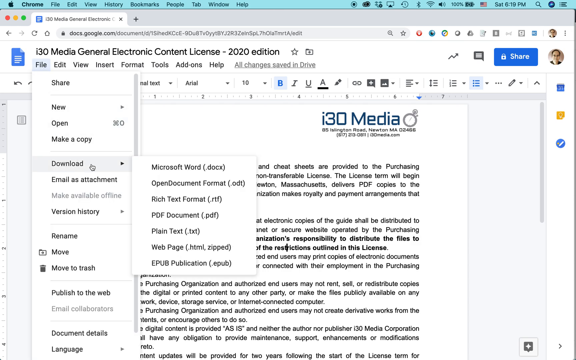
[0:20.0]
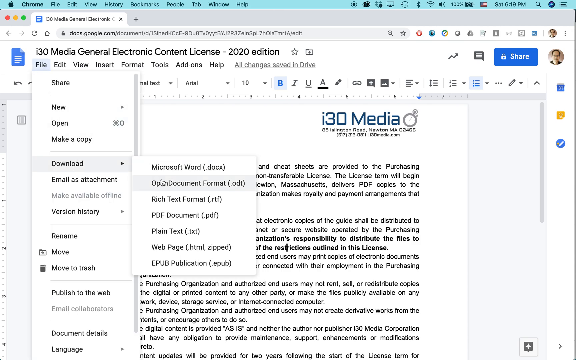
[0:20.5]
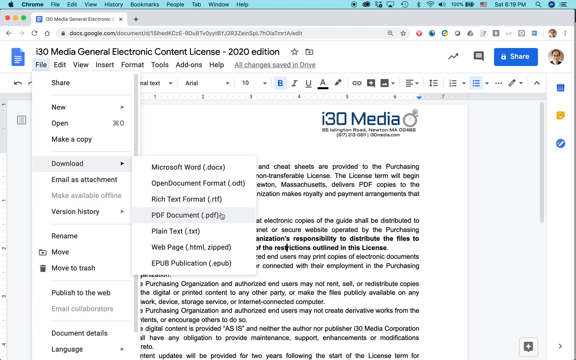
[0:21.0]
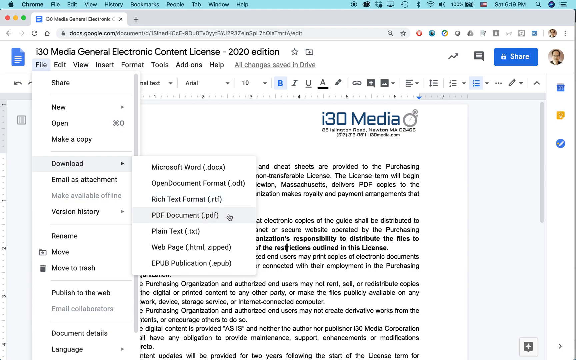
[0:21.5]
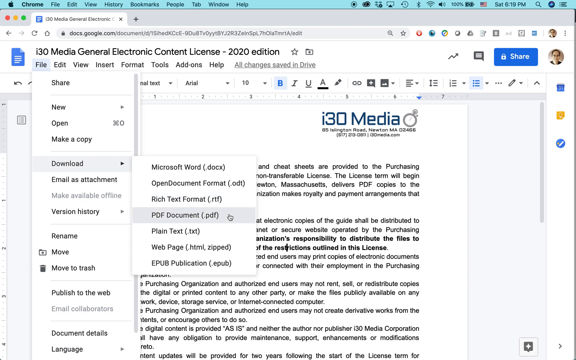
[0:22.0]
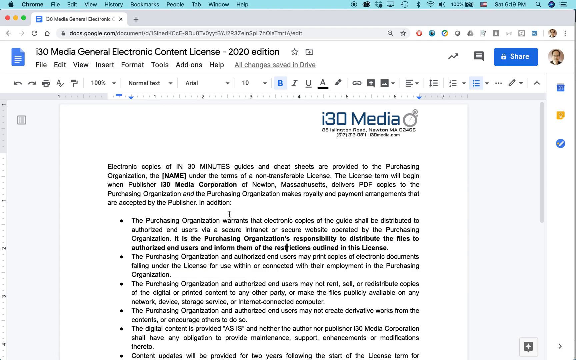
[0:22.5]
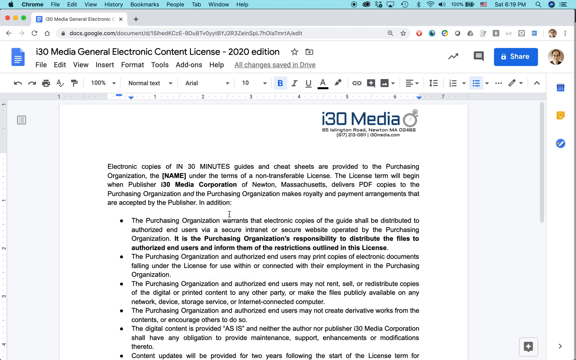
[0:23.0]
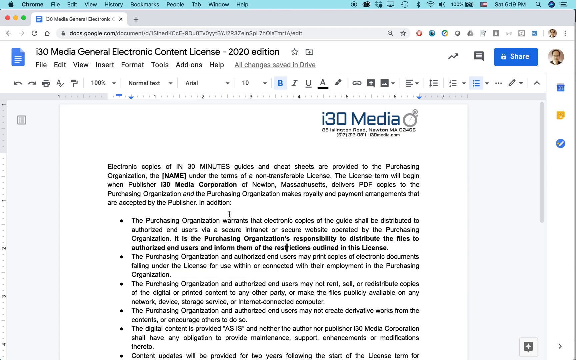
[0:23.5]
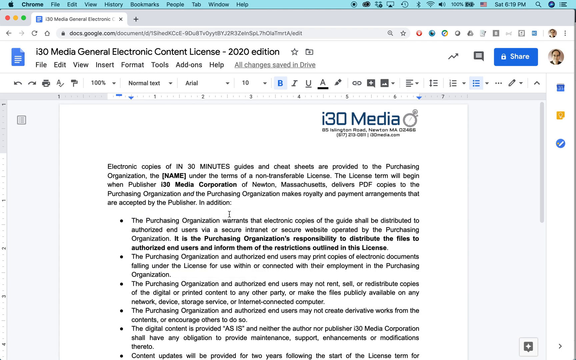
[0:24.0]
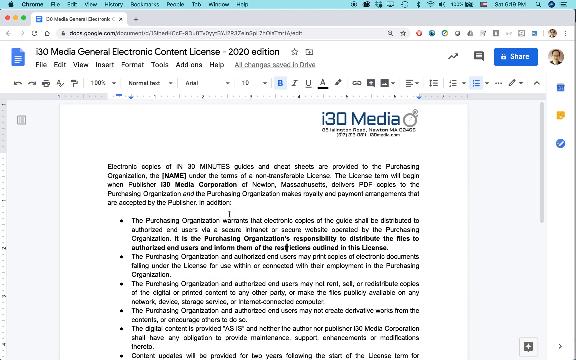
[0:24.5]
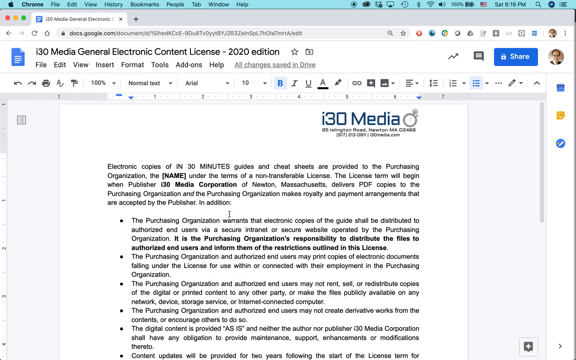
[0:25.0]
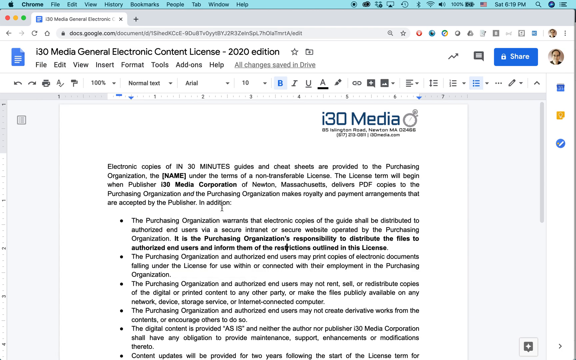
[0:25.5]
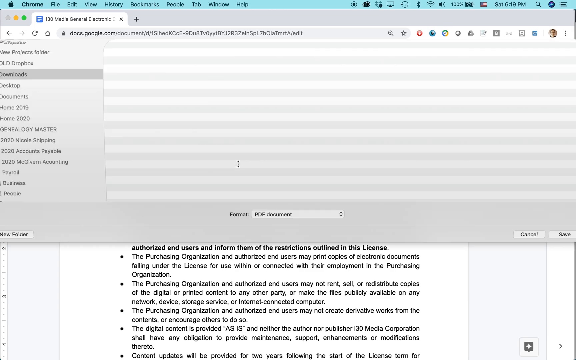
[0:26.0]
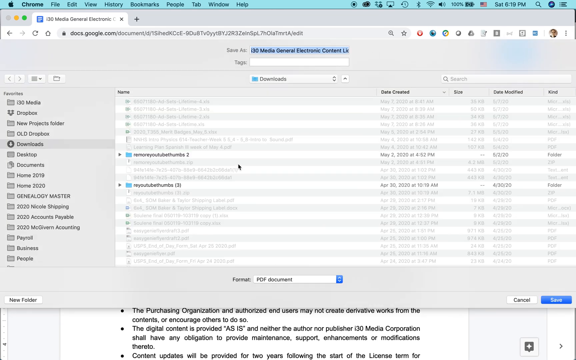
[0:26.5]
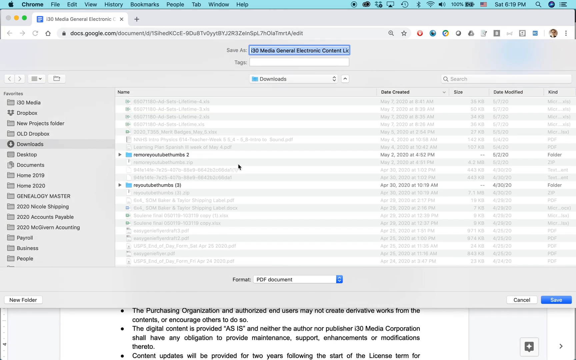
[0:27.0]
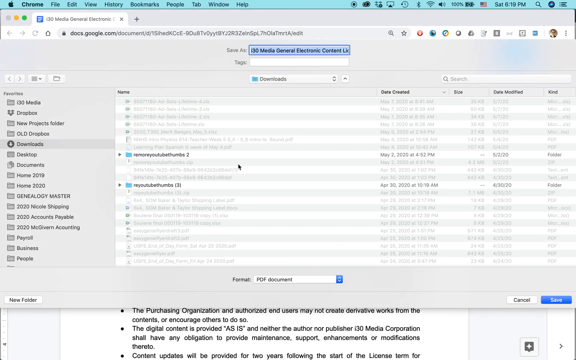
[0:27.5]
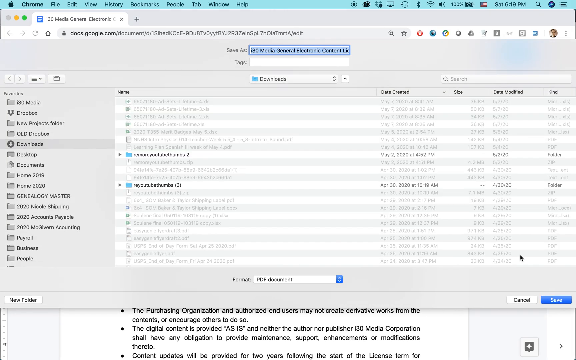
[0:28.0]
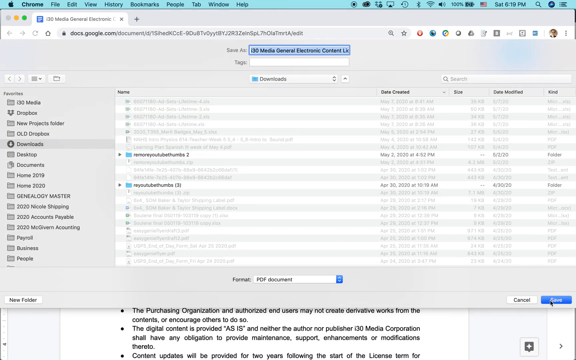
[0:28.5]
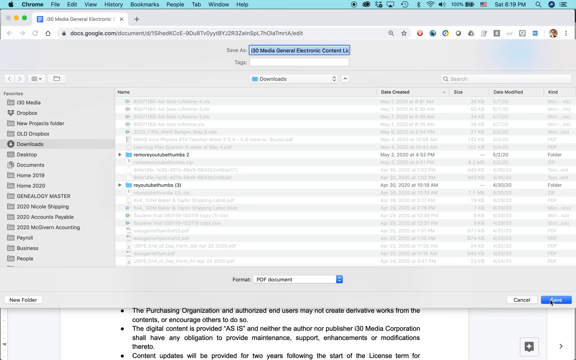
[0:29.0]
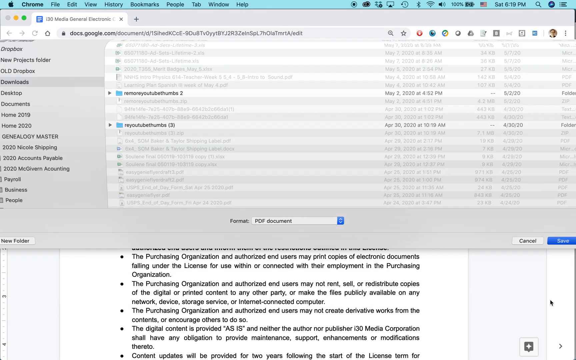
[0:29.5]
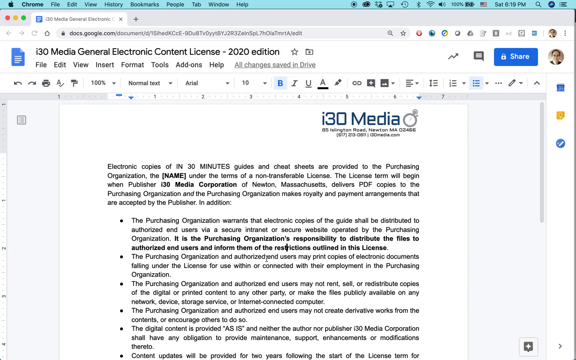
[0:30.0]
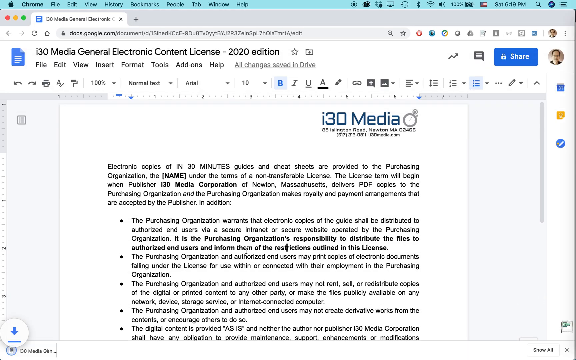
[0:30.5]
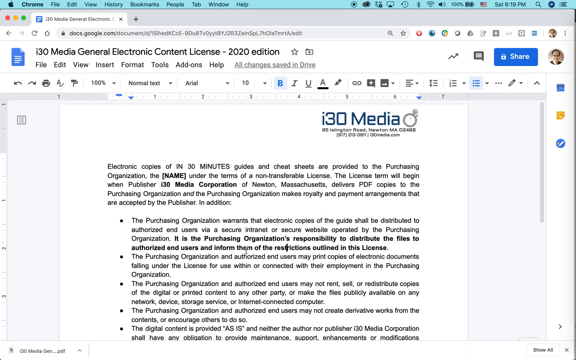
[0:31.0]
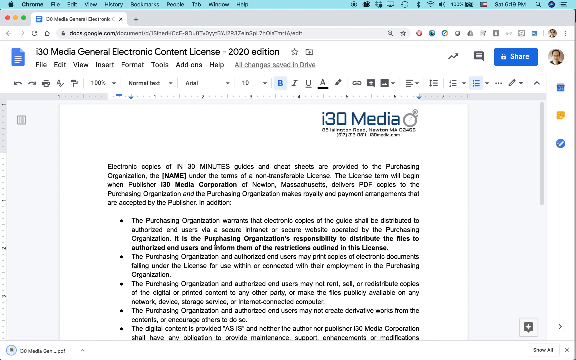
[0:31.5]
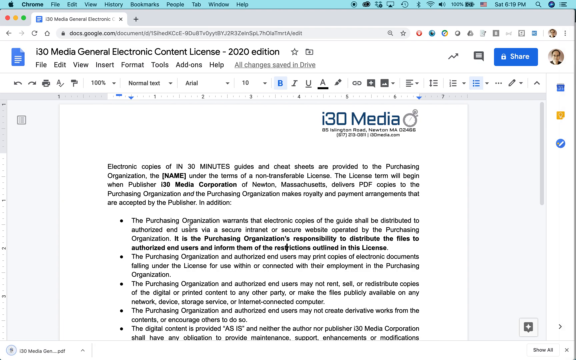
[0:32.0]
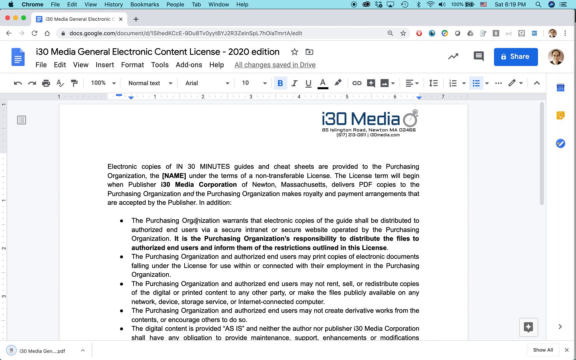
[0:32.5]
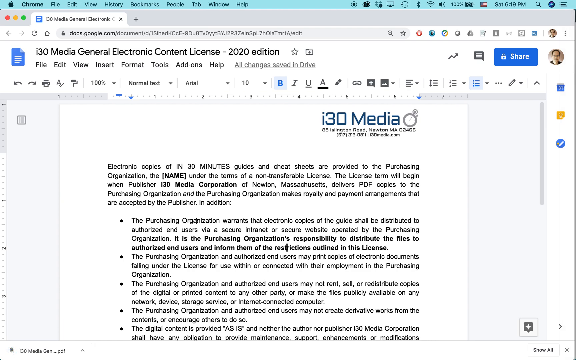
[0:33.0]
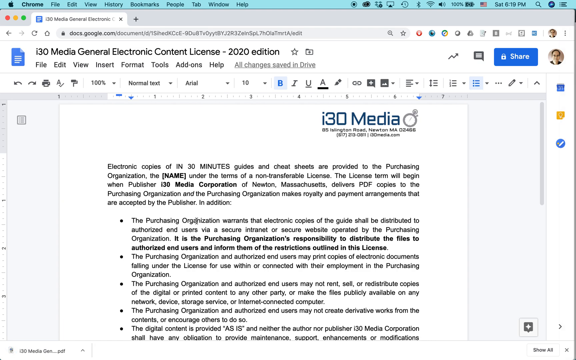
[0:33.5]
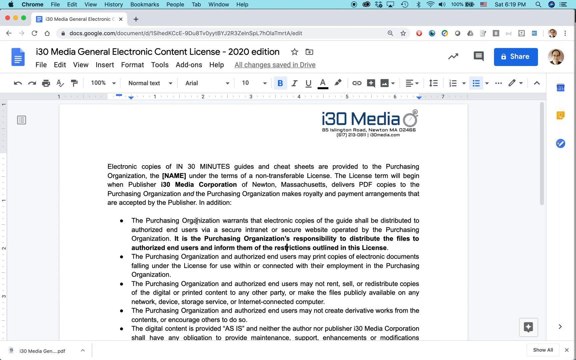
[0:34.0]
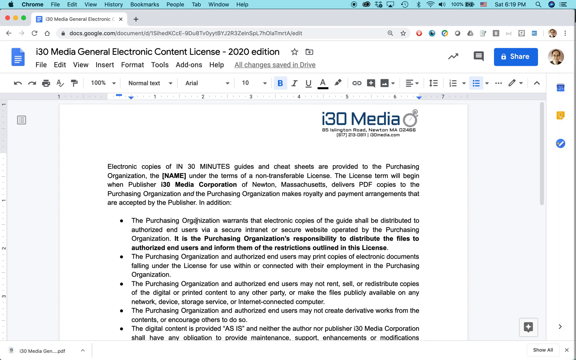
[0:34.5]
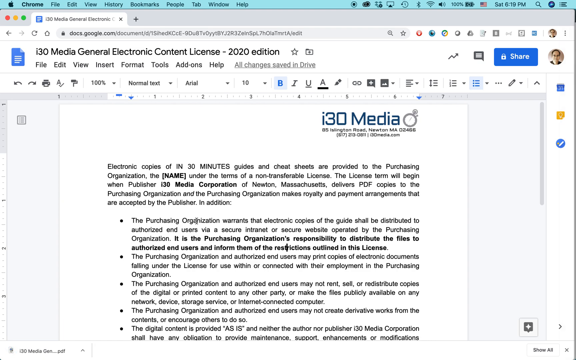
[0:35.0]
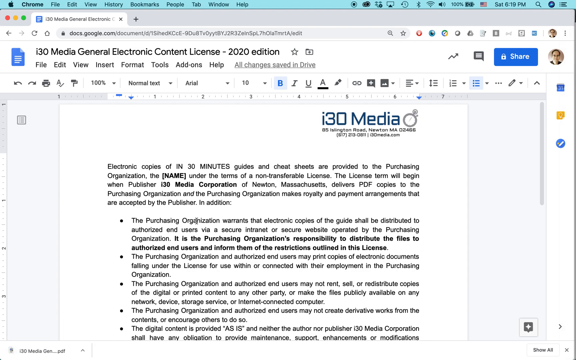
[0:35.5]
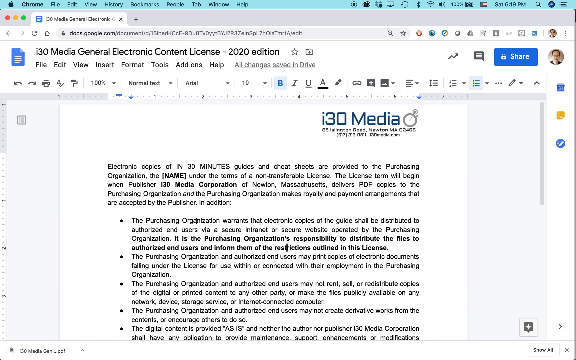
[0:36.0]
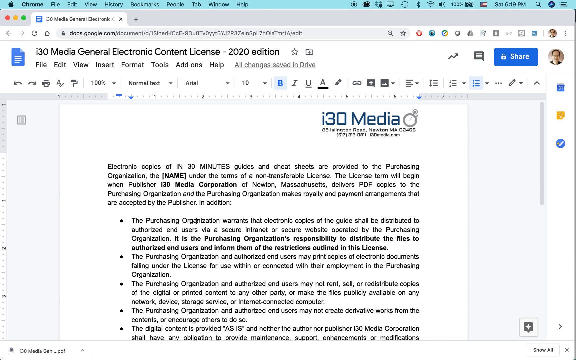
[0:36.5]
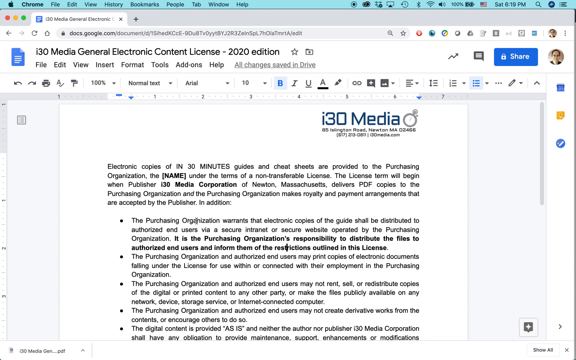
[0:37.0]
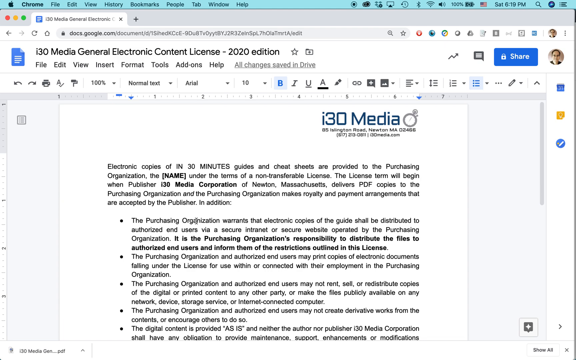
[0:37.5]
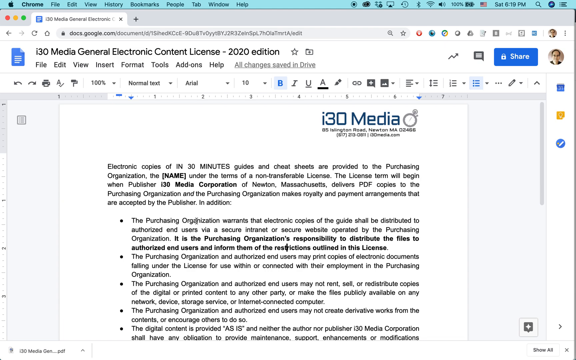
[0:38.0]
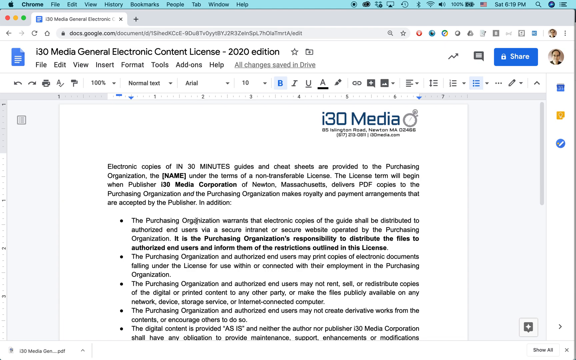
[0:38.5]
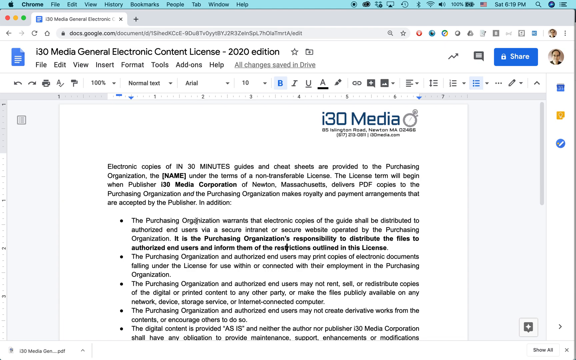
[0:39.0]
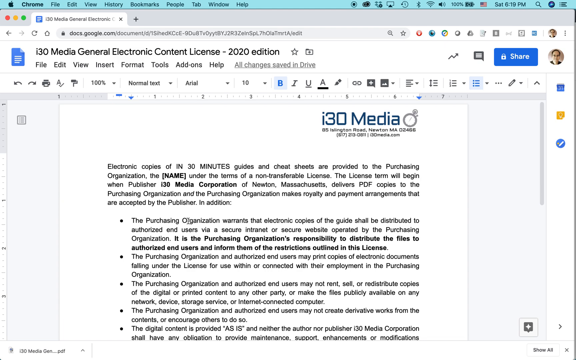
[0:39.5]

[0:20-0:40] The Google Docs page continues as the document is downloaded as a PDF file. The view then transitions to another page within macOS, where a sort of Mac downloader shows the PDF file of the Google Docs page being downloaded. The view stays on this page for the rest of the video, with only a few screen transitions. Text about 130 media and the general electronic content license is visible on the Google Docs page, which is the file downloaded as a PDF. No humans or animals appear in what seems to be a screen-recording tutorial.